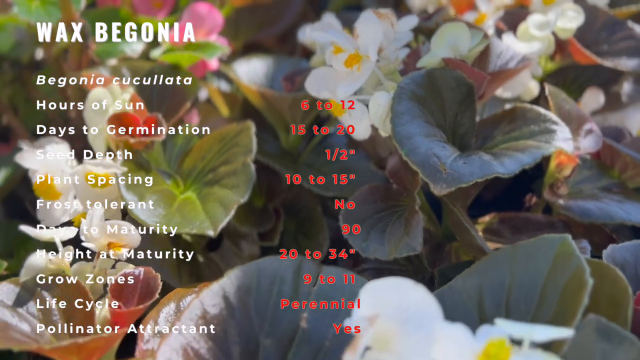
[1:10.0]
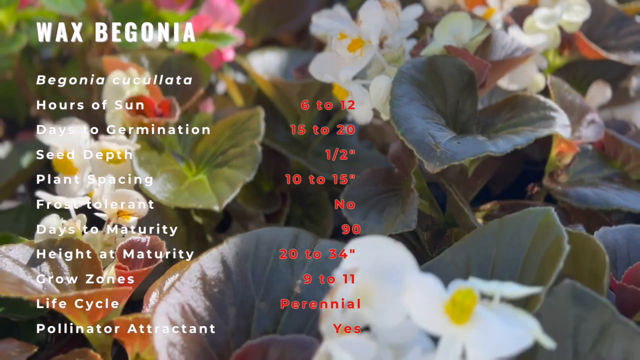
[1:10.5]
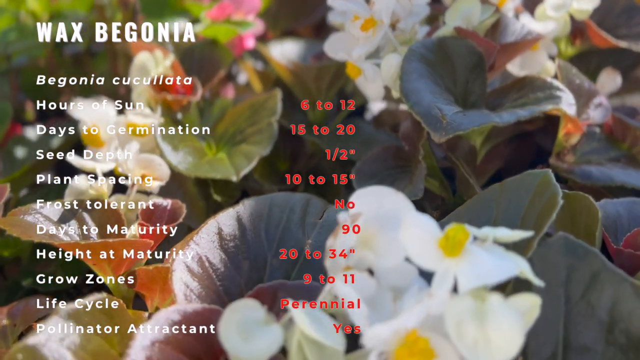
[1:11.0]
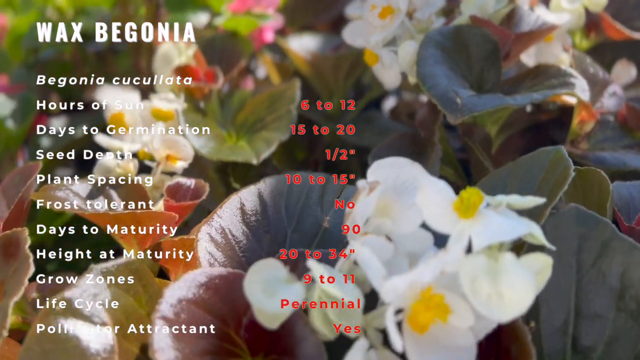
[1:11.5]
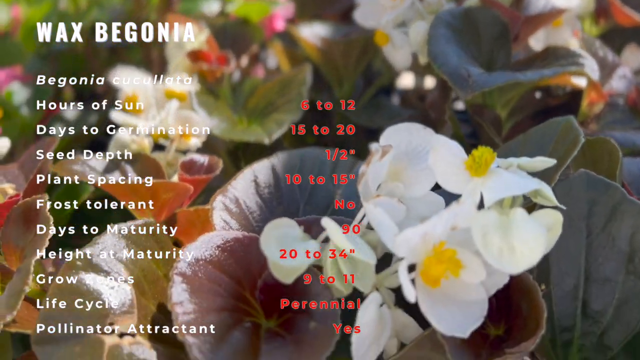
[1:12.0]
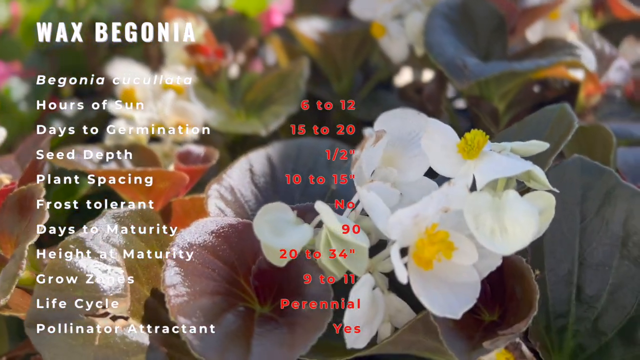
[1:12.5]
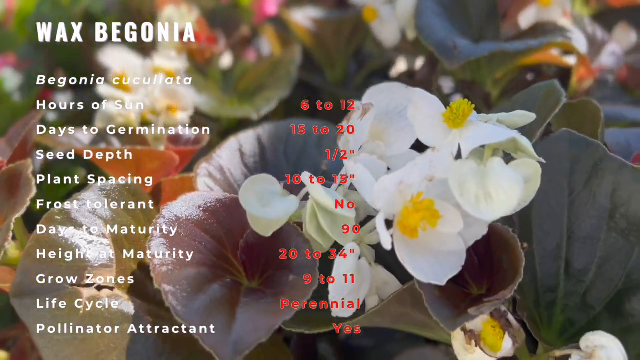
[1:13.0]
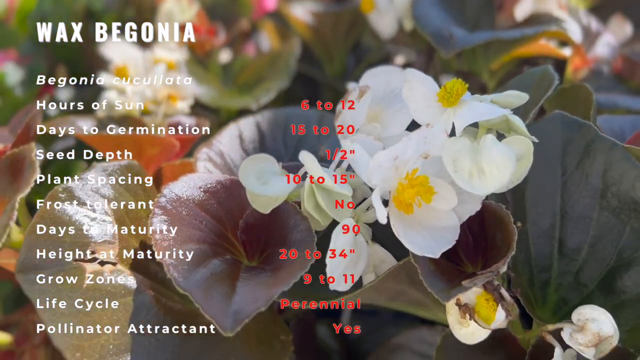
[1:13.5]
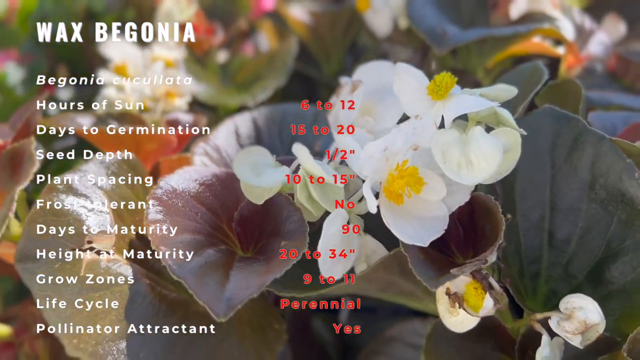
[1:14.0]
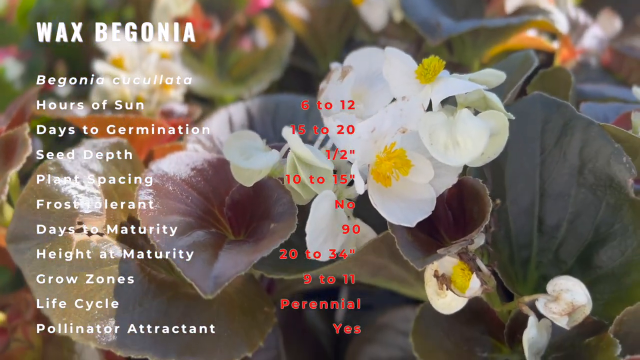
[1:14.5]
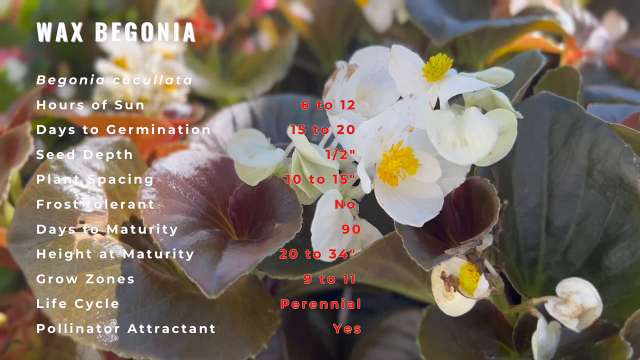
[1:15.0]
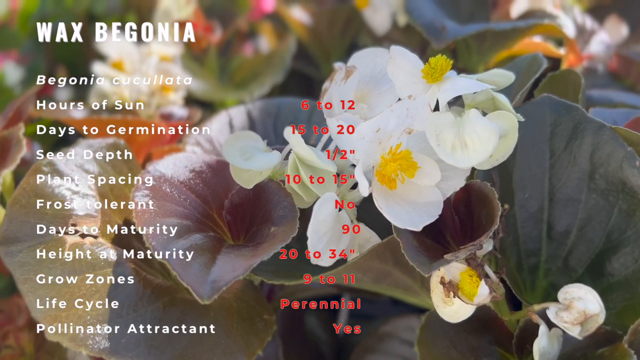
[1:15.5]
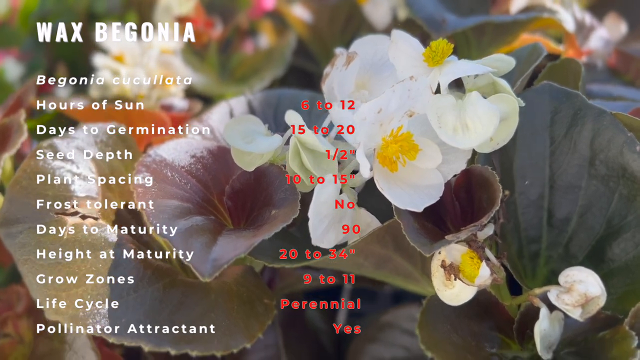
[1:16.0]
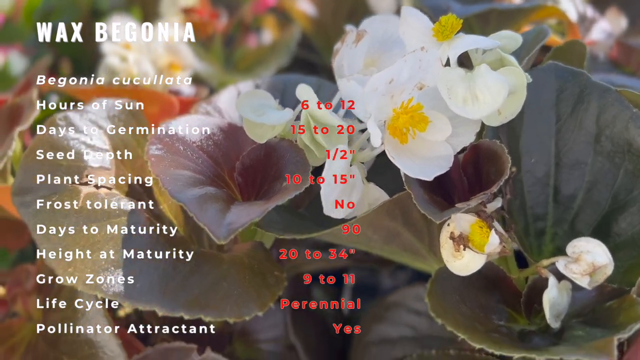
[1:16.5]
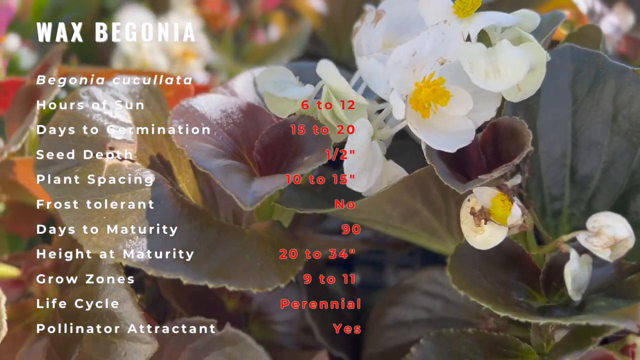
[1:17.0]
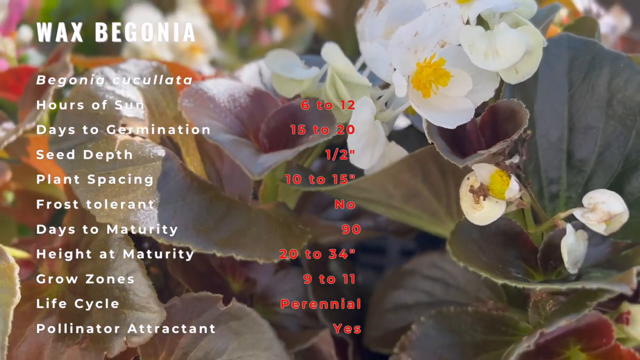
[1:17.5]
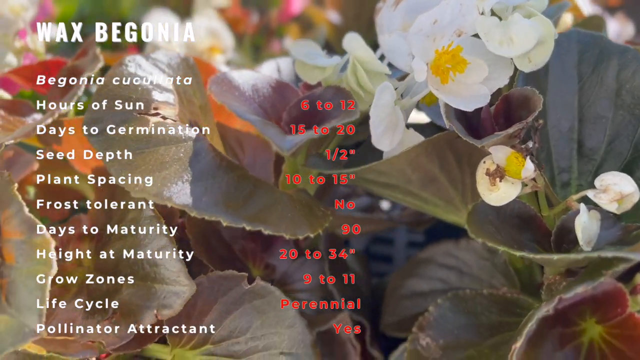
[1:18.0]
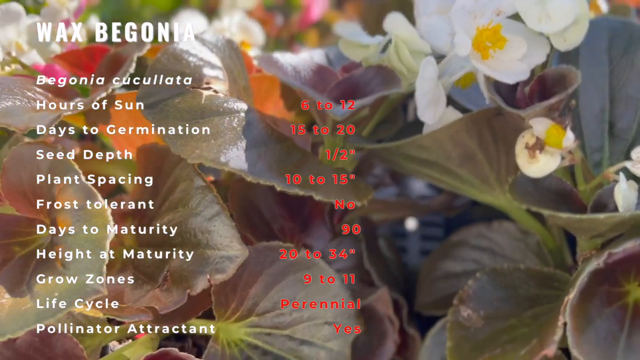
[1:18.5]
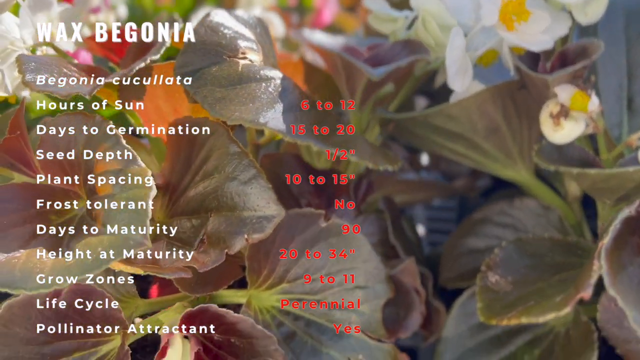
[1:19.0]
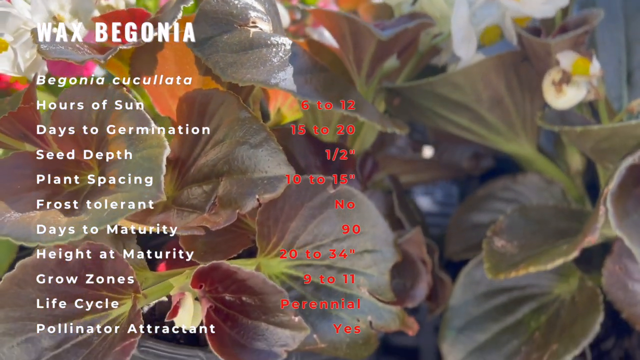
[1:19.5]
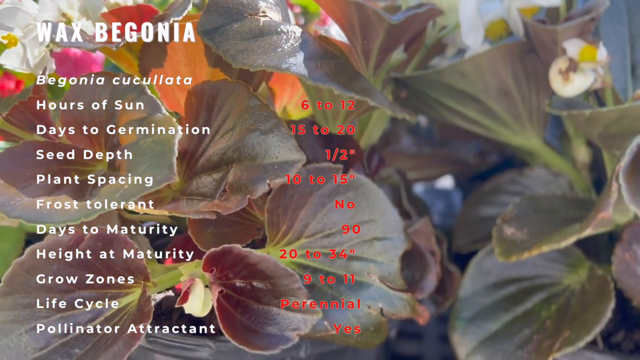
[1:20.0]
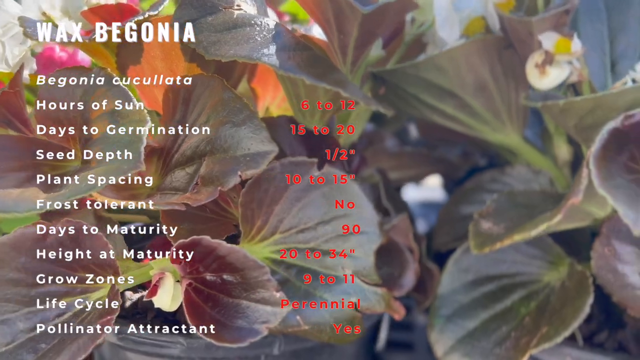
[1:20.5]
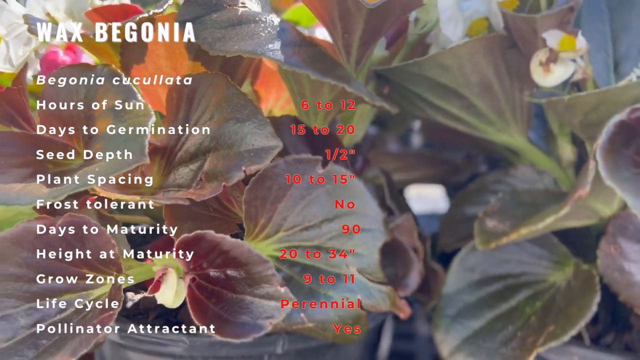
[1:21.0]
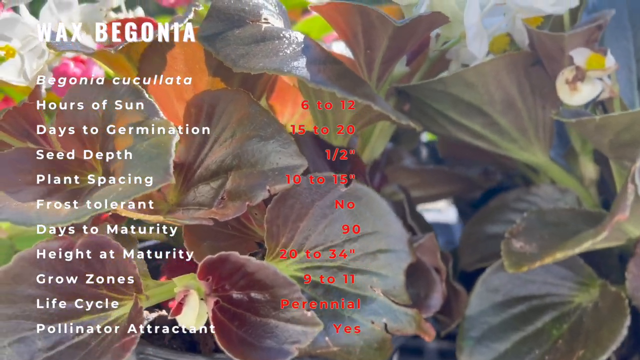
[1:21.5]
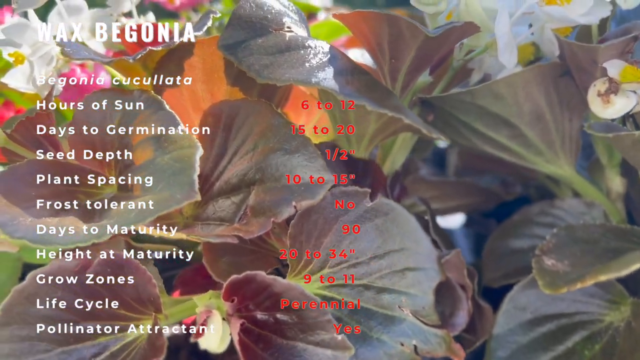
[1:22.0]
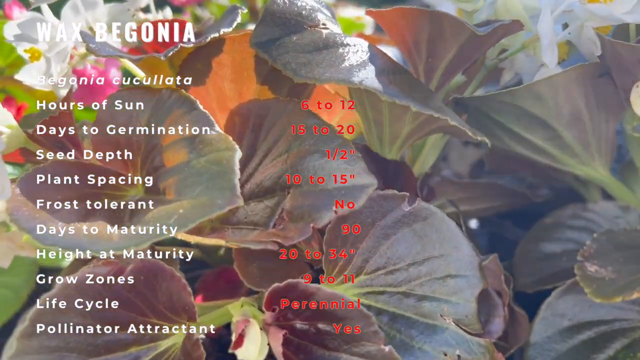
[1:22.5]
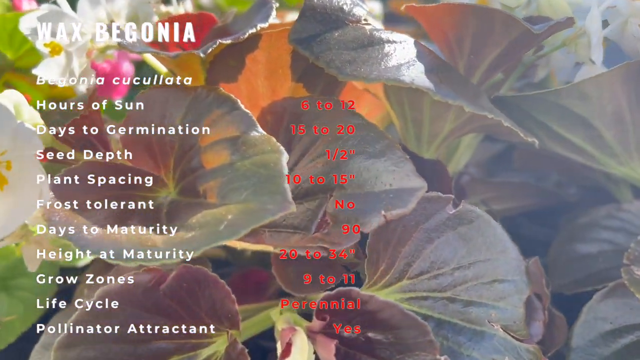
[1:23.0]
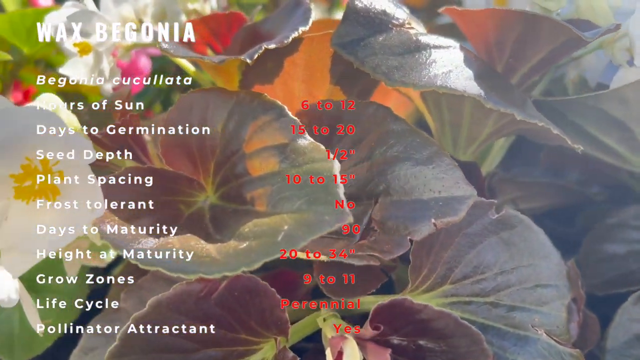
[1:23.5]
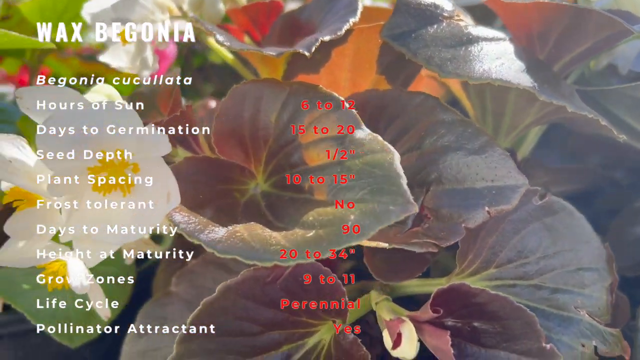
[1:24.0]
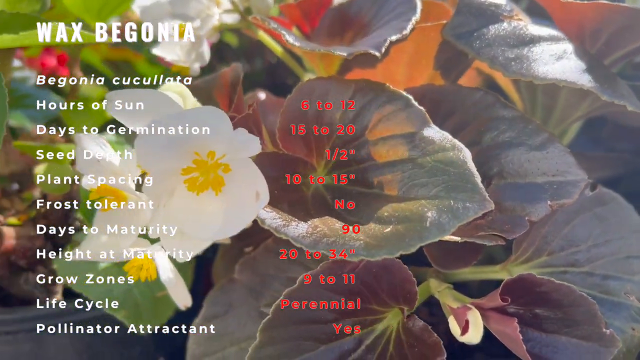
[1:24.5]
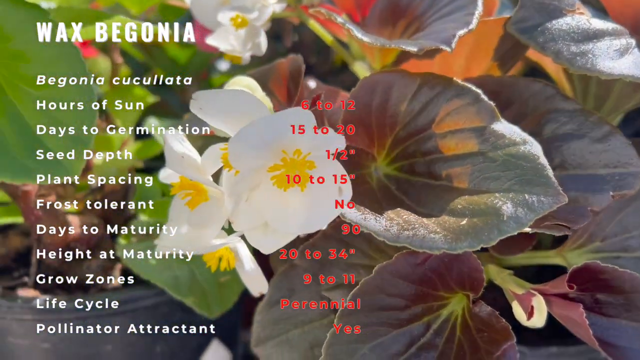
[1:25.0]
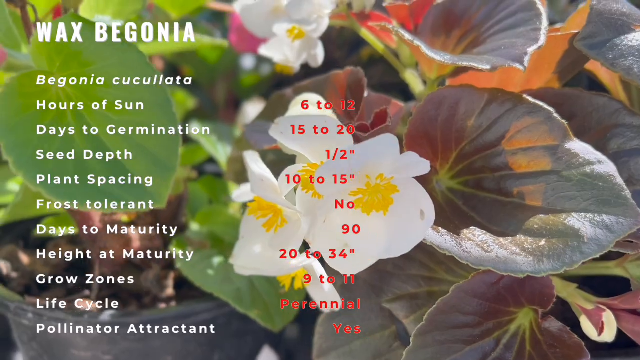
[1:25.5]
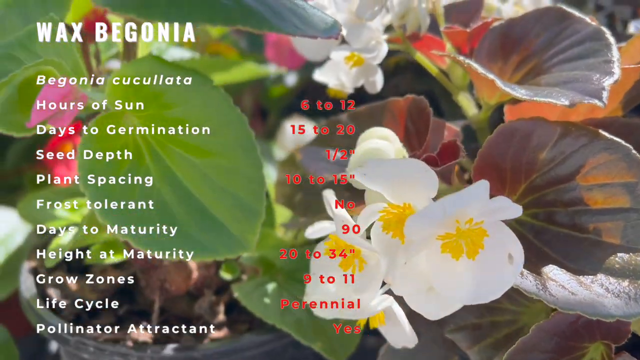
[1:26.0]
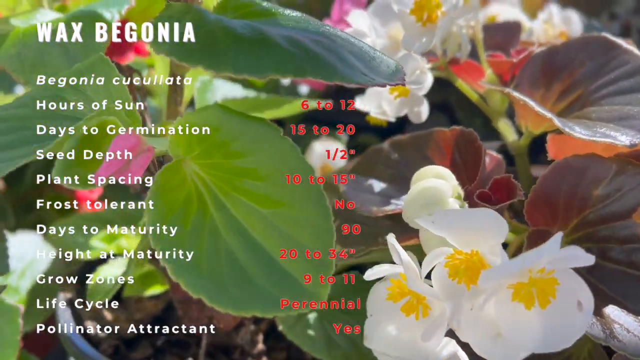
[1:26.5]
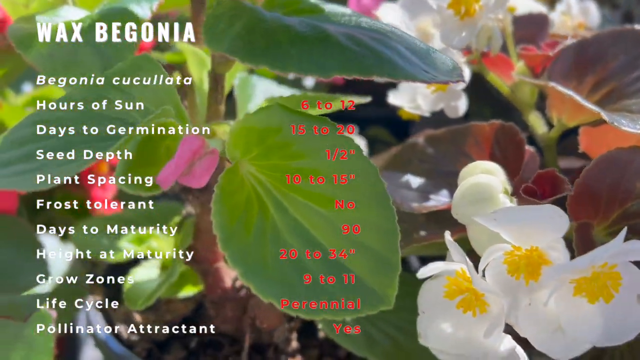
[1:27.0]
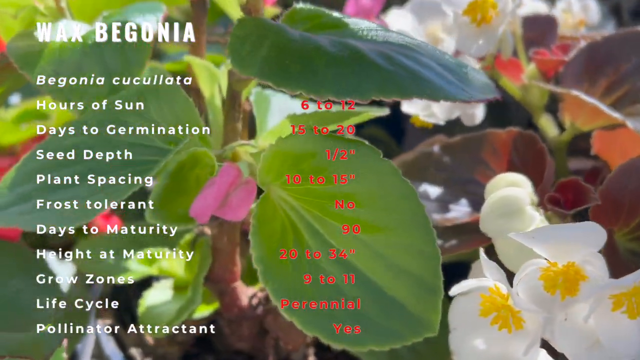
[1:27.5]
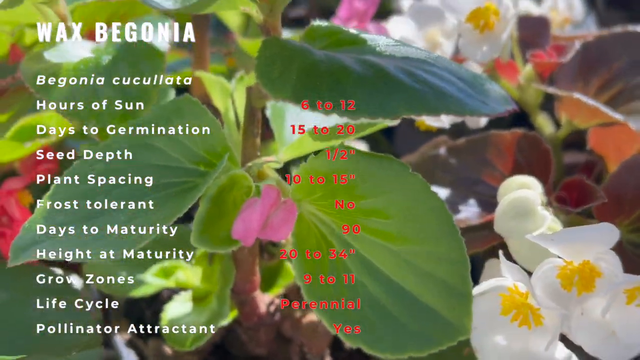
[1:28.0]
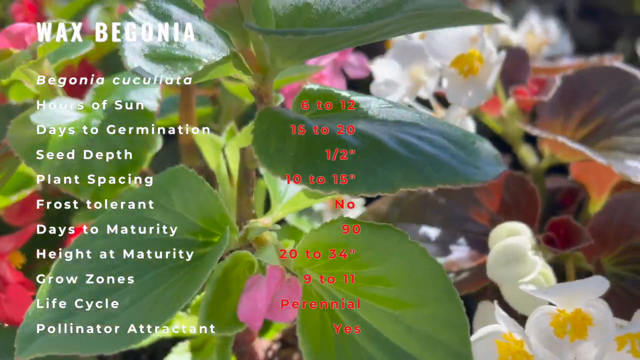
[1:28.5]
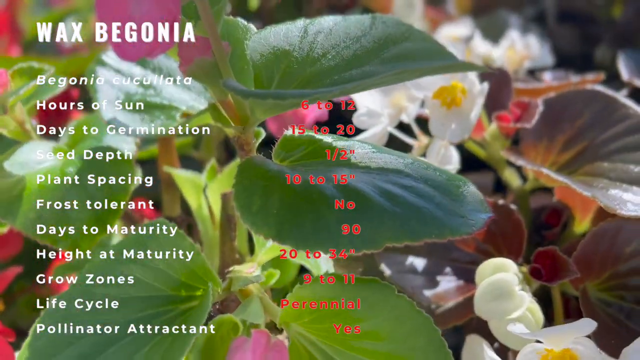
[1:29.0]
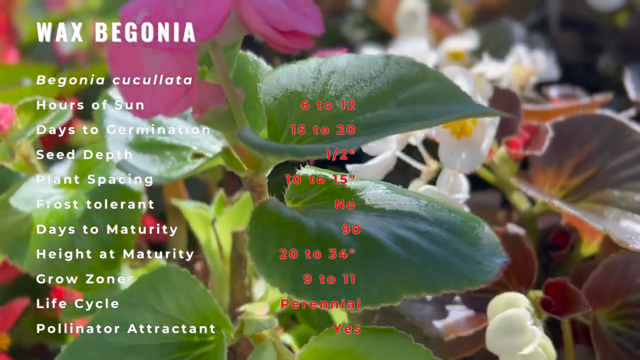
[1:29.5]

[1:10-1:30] The view is zoomed in on white flowers and little pink ones that look like the same type of flower in different colors. In the middle of each are little yellow balls, apparently the stamens. A bunch of green leaves, some very bright and some dark, surround them, and the plant looks somewhat like a bush. The flowers look medium-sized. Text appears, partly hard to read: white text on the left and red text that is especially hard to read. It reads "Wax Begonia, Begonia cuculata, hours of sun, 6 to 12, days to germination, 15 to 20, seed depth, 1 1⁄2 inch, plant spacing, 10 to 15 inches, frost-tolerant, no, days to maturity, 90, height at maturity," with a value that is hard to read, possibly 15 or 16, and "growth zones, 9 to 11."